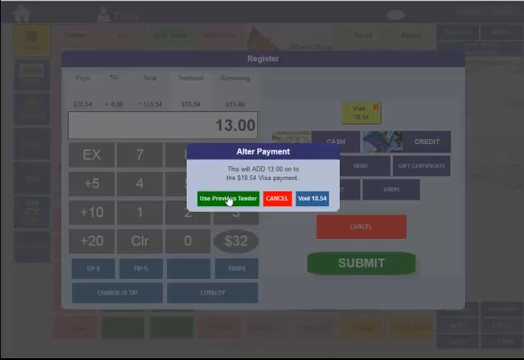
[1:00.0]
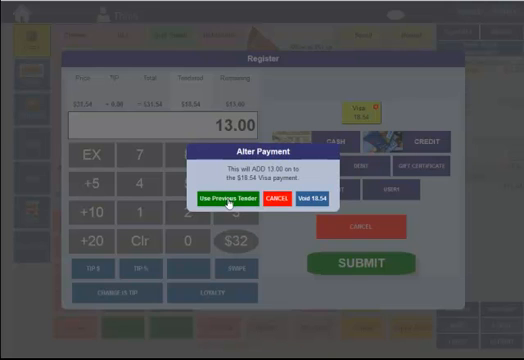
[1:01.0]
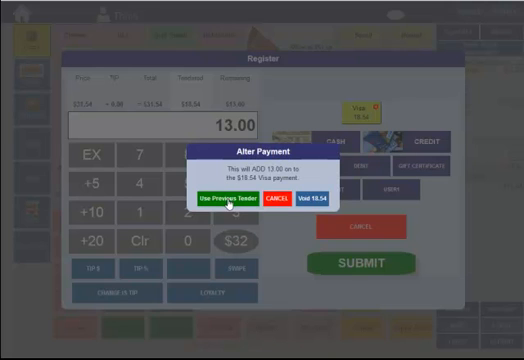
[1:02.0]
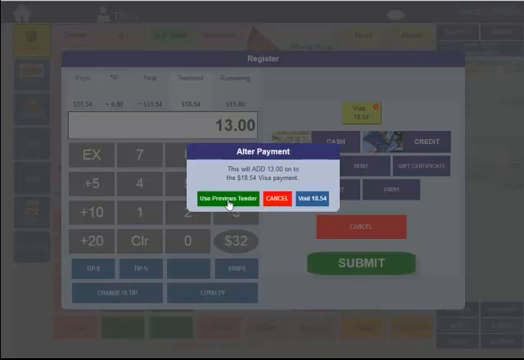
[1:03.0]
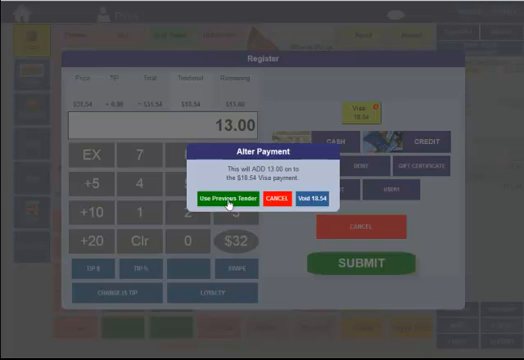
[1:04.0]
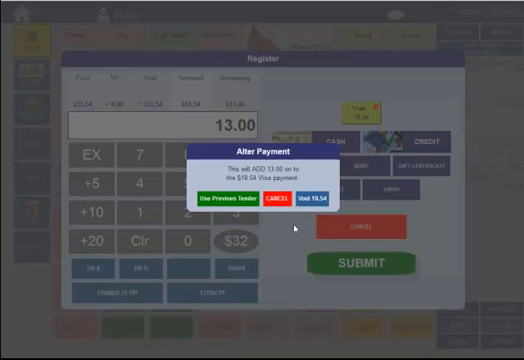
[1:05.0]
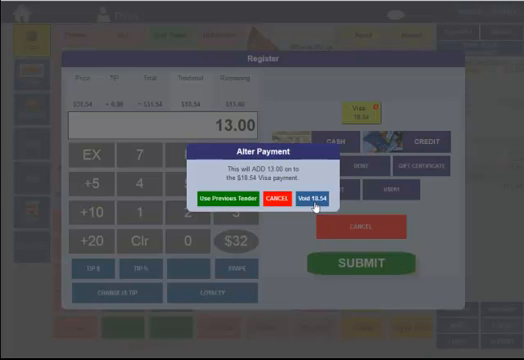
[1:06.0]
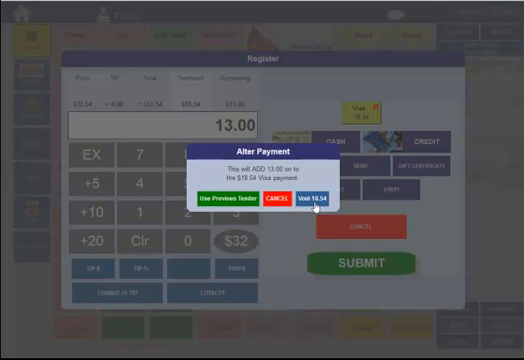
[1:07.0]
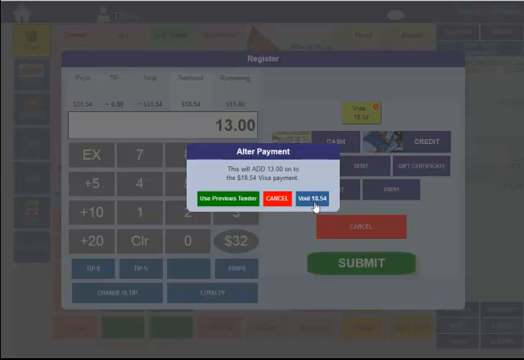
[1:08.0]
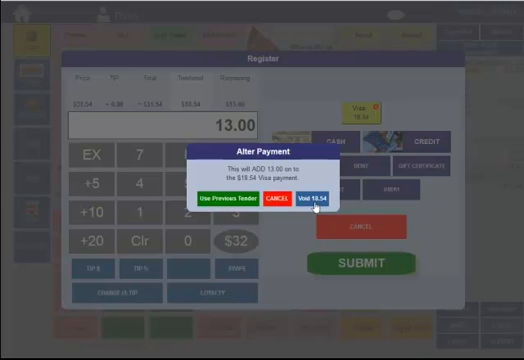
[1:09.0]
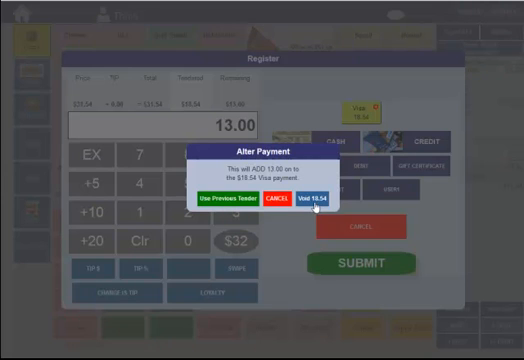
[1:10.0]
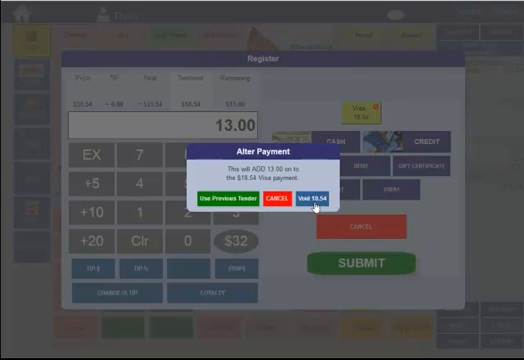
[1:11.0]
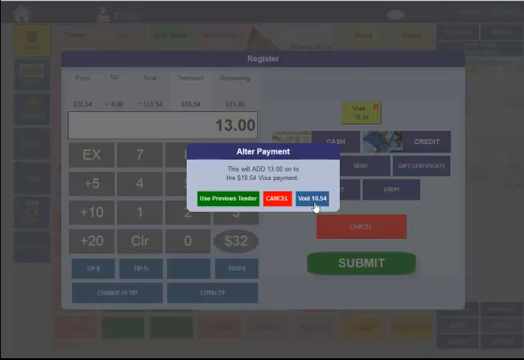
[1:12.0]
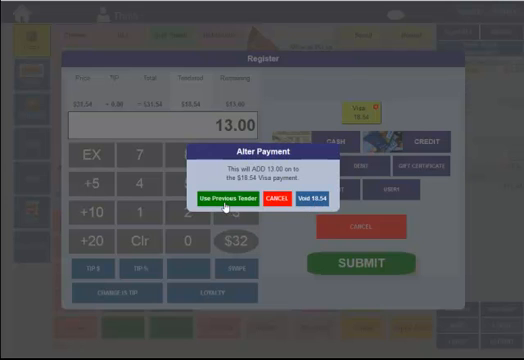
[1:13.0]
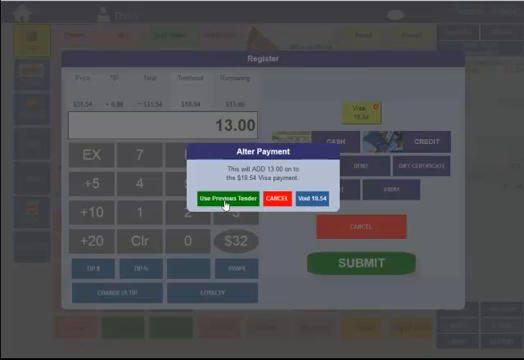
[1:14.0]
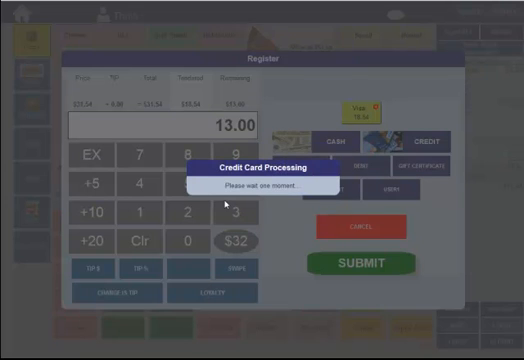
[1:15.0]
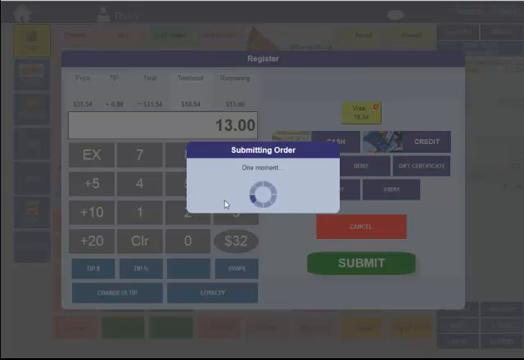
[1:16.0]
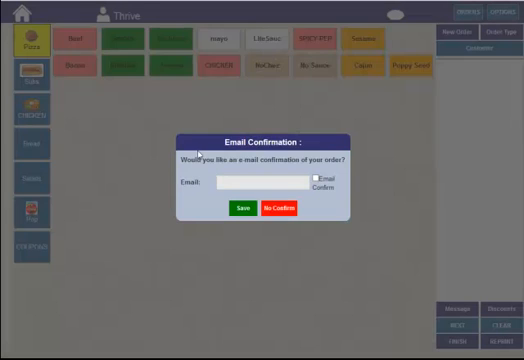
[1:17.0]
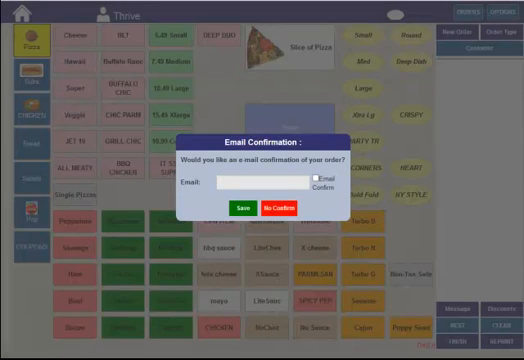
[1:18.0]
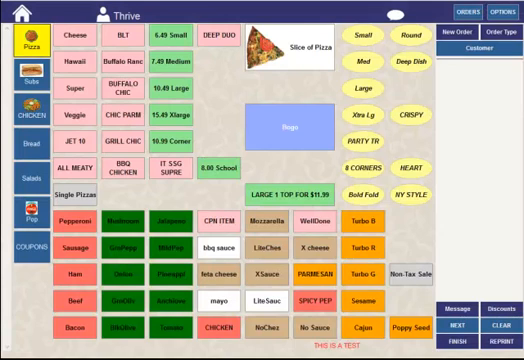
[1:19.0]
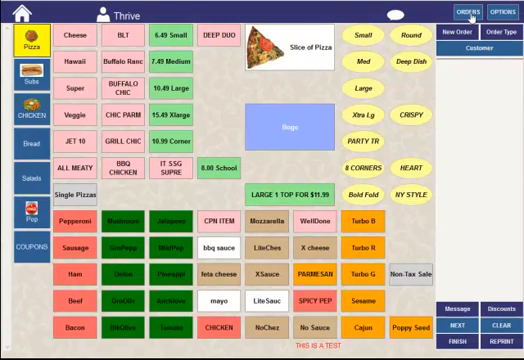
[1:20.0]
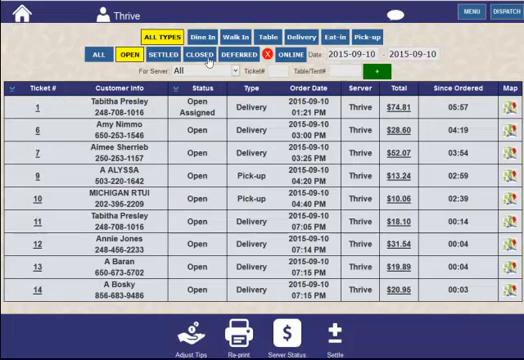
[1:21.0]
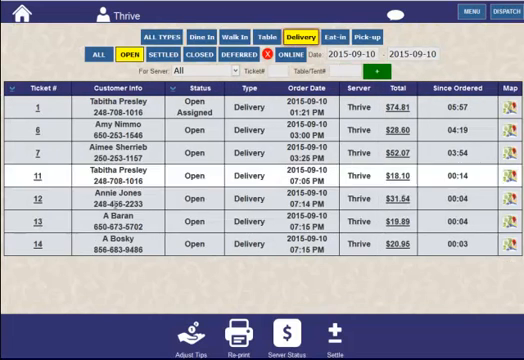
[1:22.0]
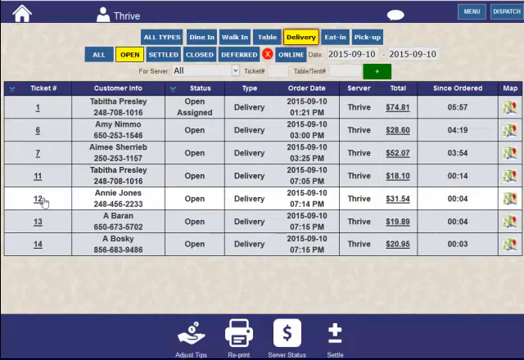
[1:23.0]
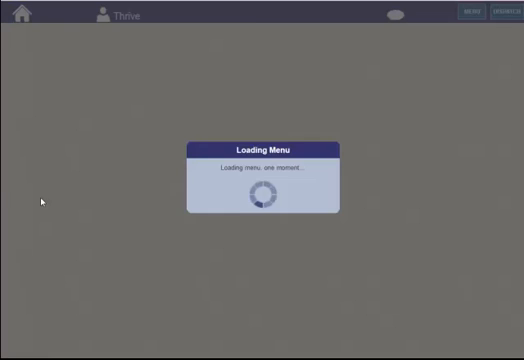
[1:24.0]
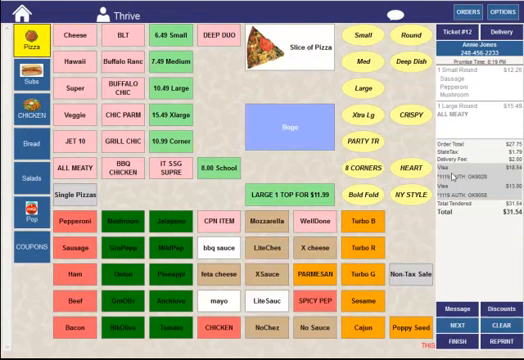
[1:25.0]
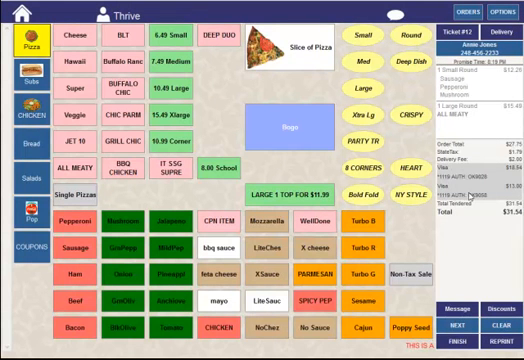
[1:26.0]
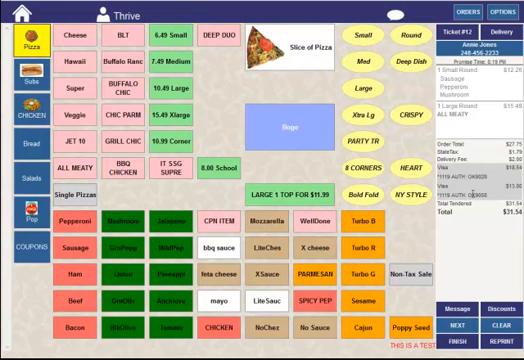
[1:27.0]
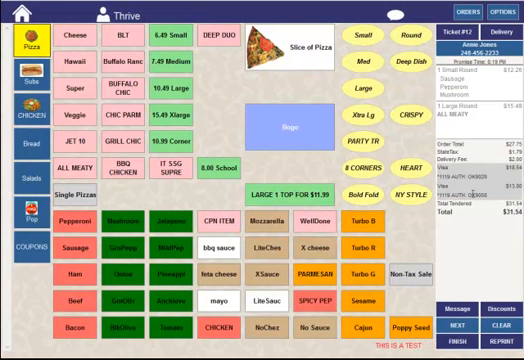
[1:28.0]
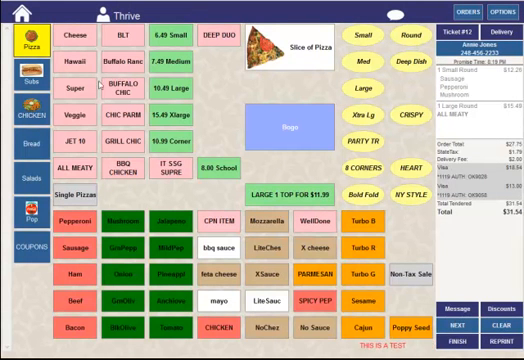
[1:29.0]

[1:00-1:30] The Visa option is clicked for payment, and the screen reads "this will add $13 on the $18.54 visa payment". The option "Use Transfer" is clicked, and then on the other side "void $18.54" is shown. The order is submitted and the screen reads "credit card processing. Please wait one moment." The view goes back to the beginning of the menu, and a notification pops up reading "email confirmation. Would you like an email confirmation for your order?" The orders are then checked once more.